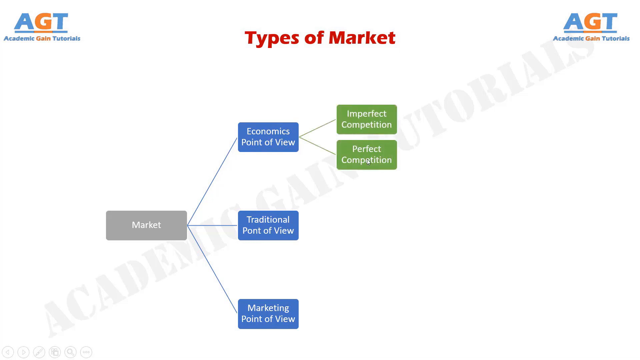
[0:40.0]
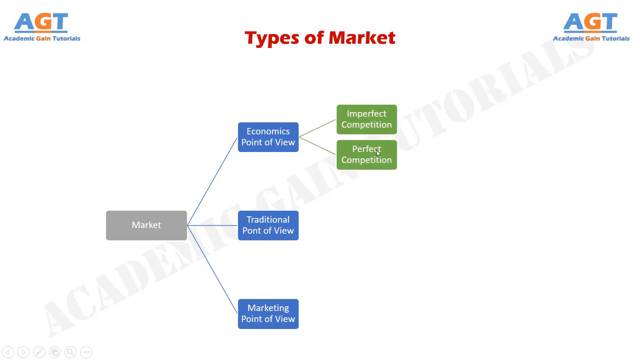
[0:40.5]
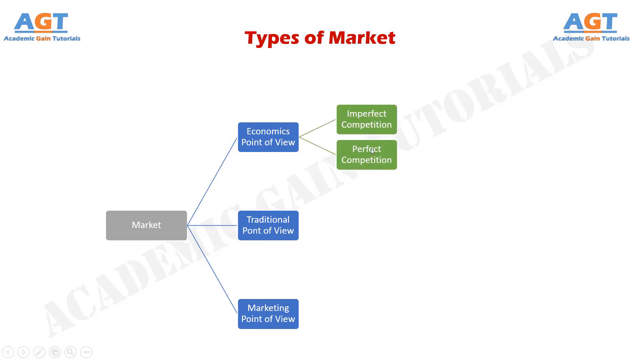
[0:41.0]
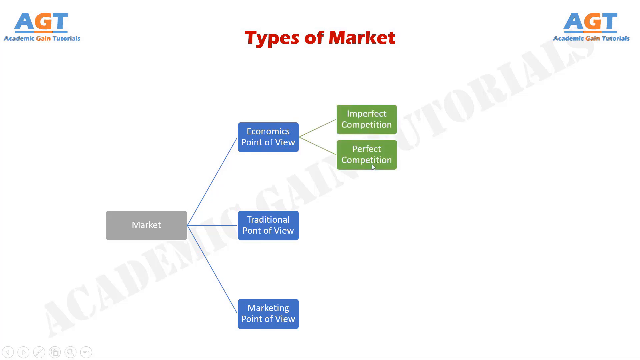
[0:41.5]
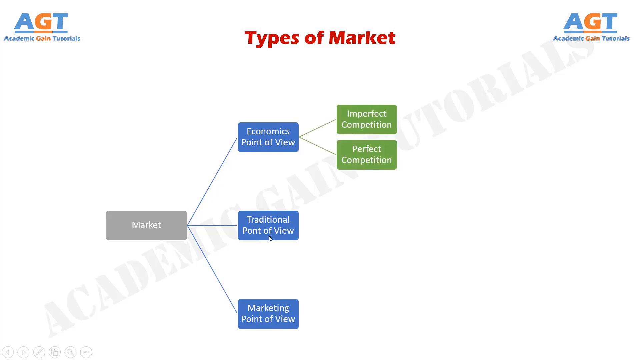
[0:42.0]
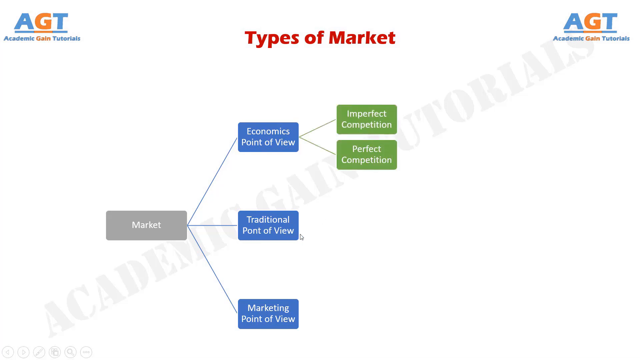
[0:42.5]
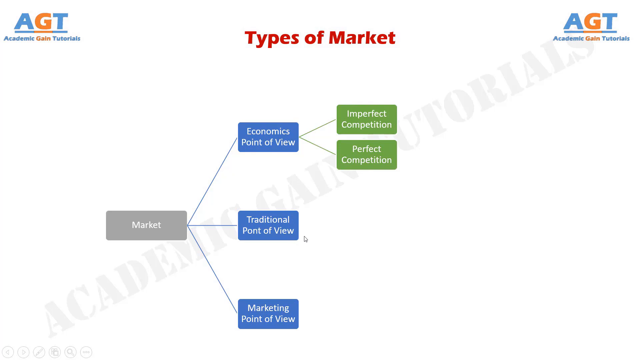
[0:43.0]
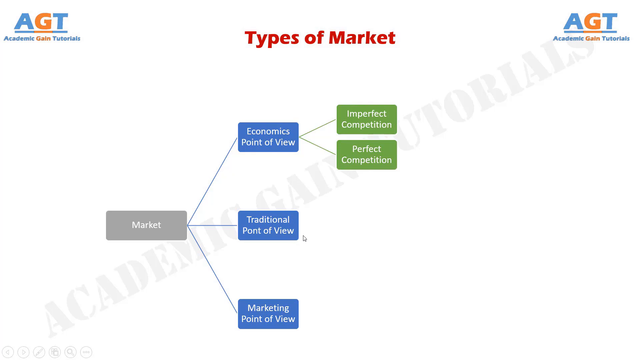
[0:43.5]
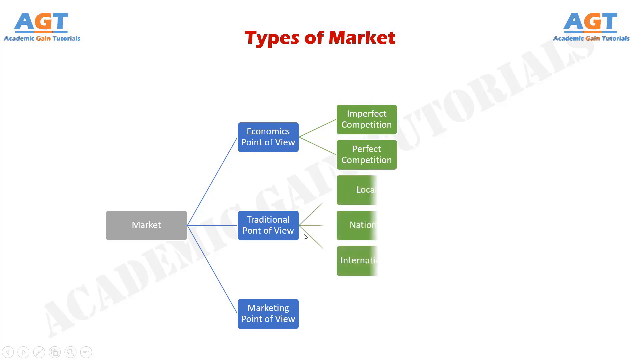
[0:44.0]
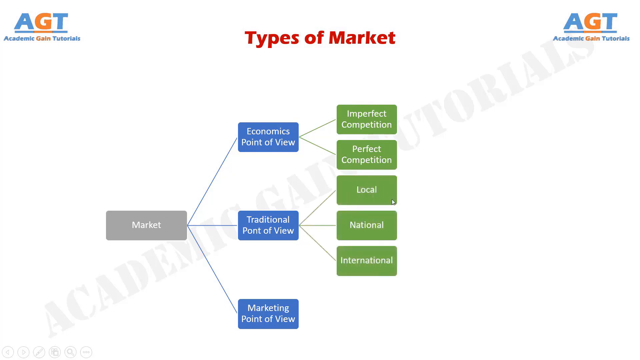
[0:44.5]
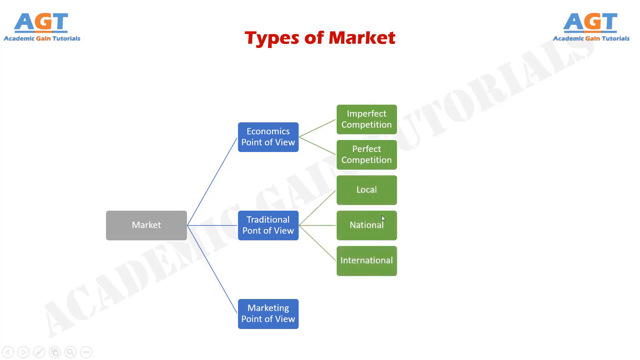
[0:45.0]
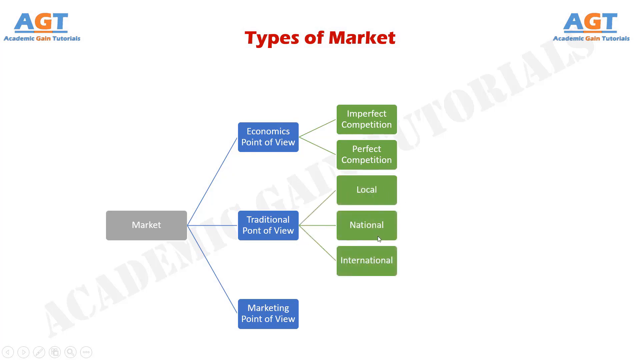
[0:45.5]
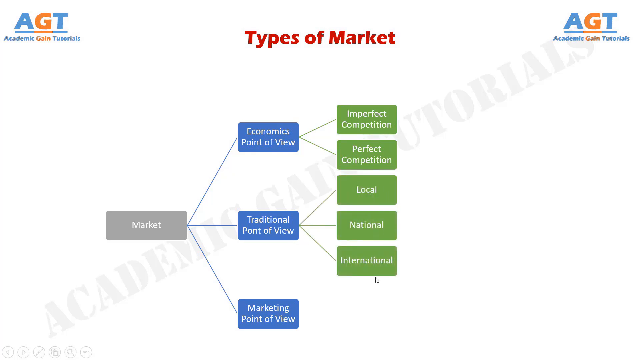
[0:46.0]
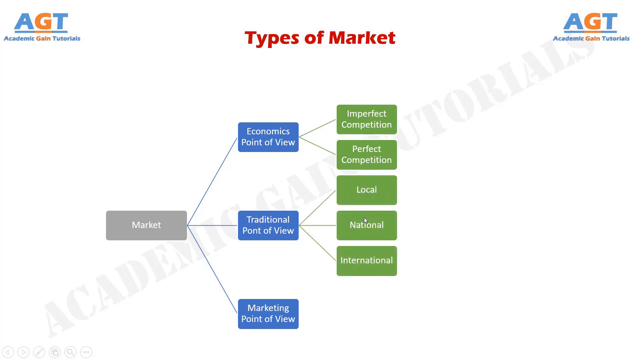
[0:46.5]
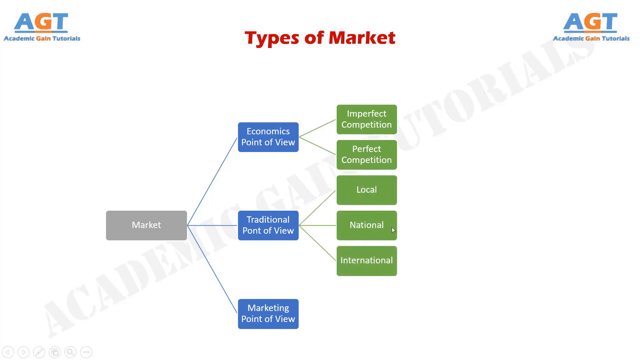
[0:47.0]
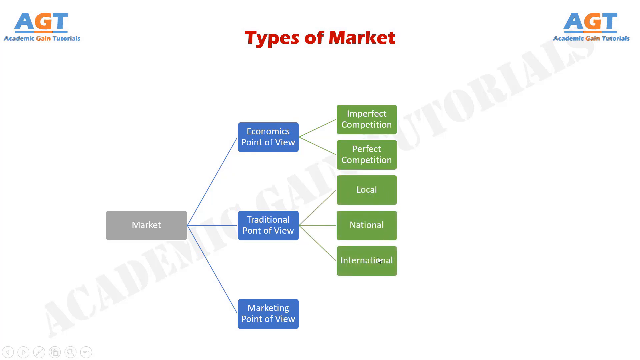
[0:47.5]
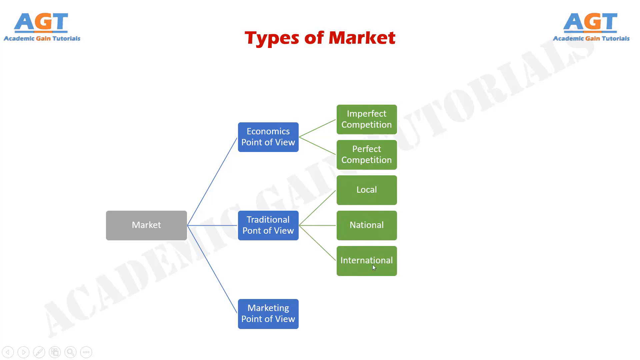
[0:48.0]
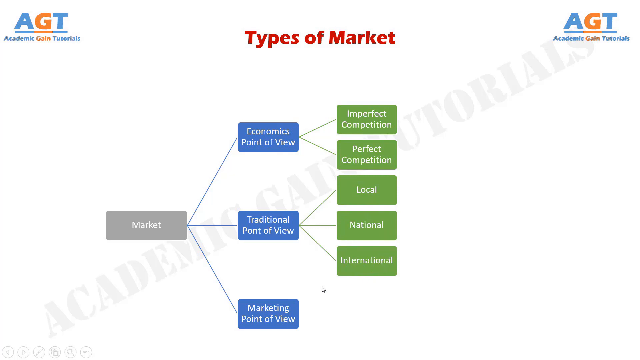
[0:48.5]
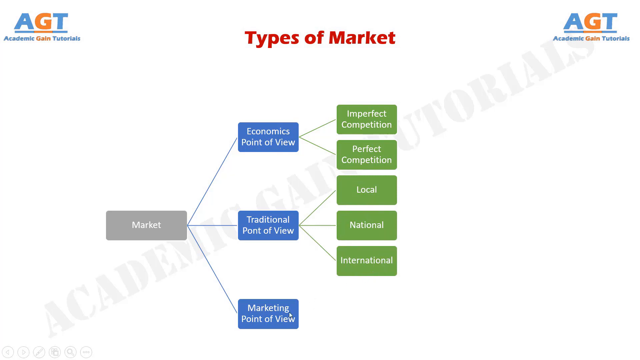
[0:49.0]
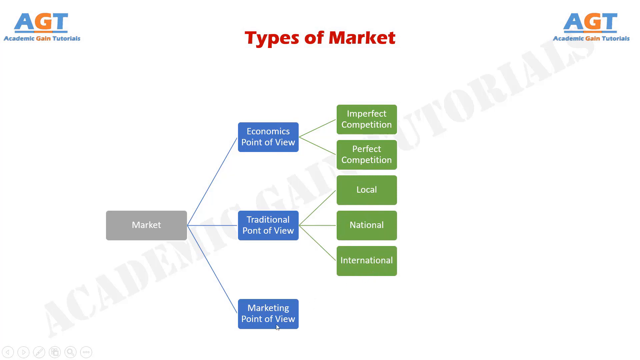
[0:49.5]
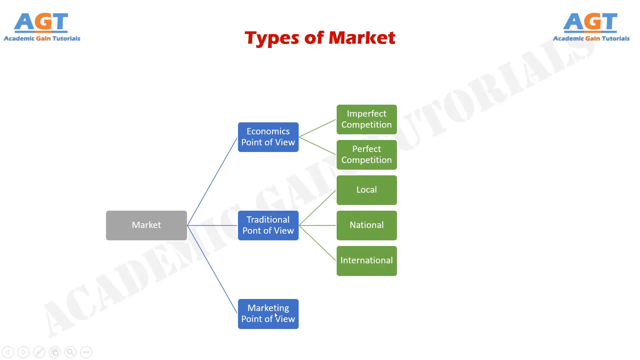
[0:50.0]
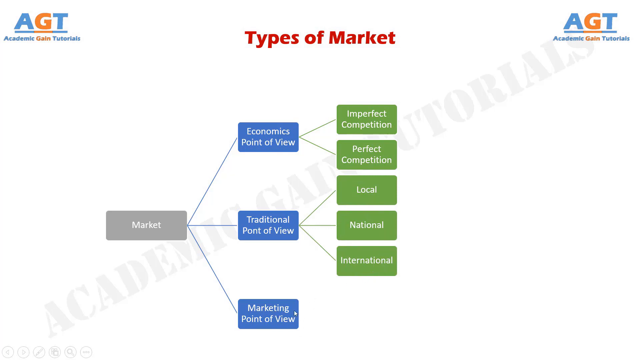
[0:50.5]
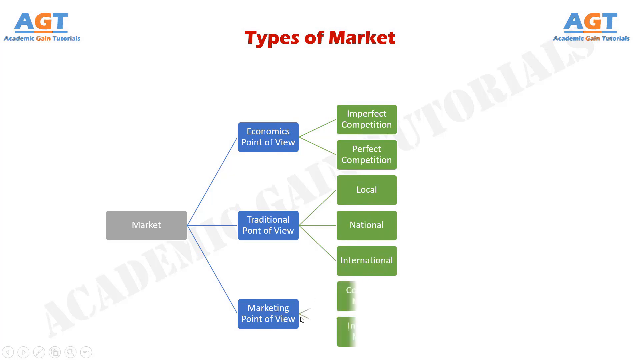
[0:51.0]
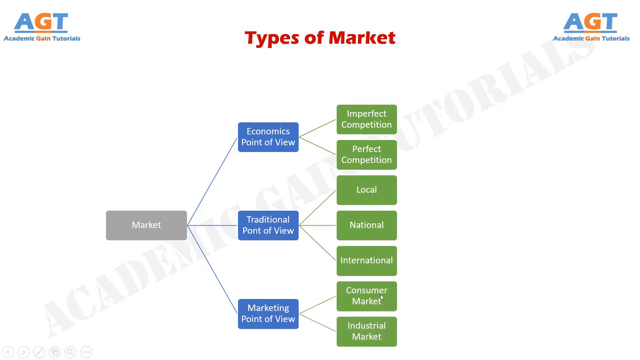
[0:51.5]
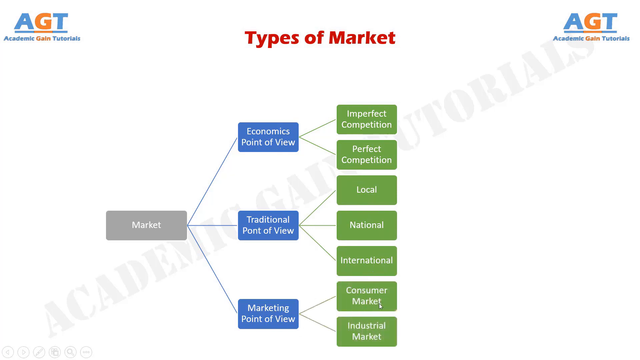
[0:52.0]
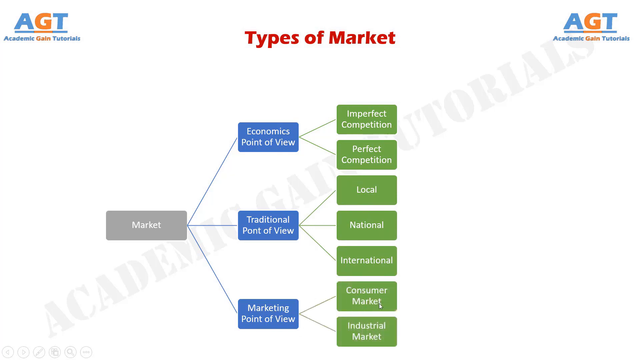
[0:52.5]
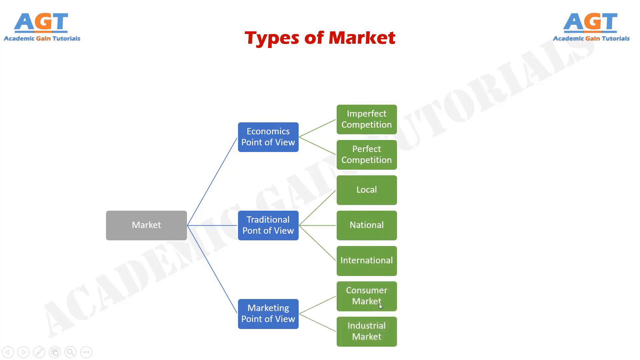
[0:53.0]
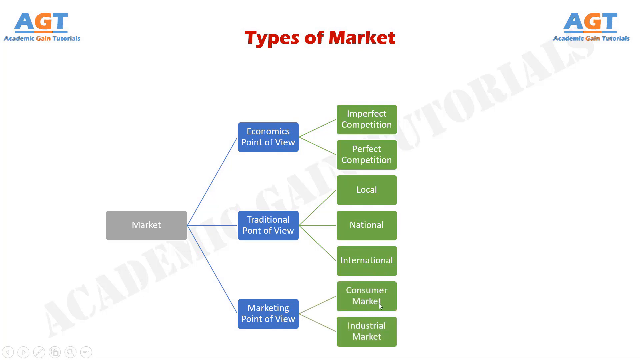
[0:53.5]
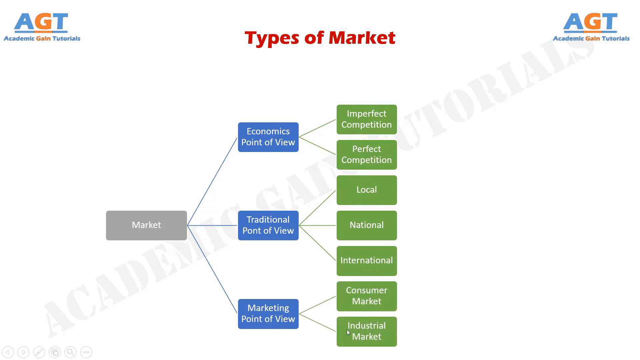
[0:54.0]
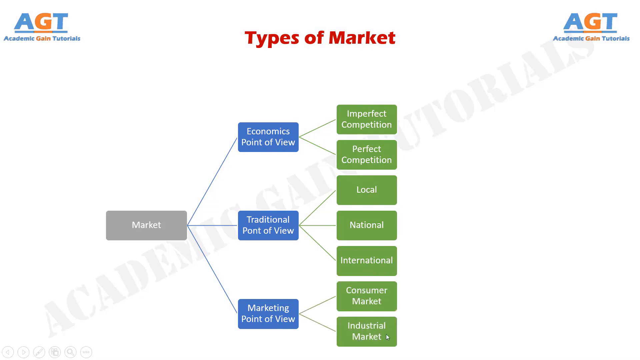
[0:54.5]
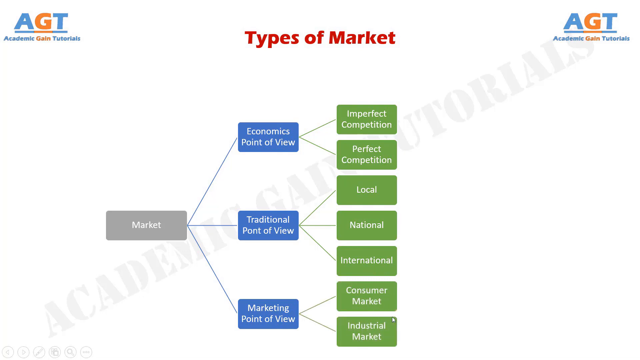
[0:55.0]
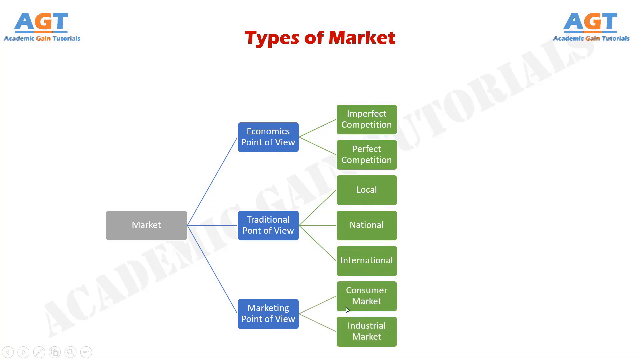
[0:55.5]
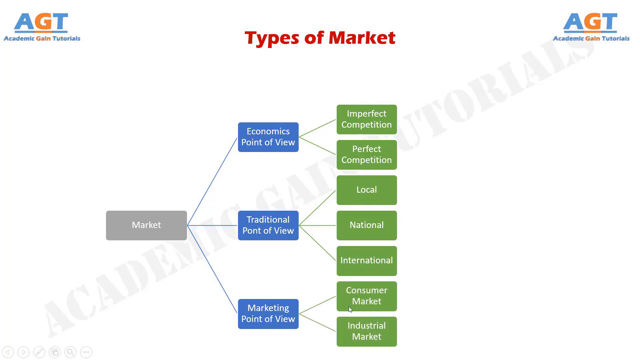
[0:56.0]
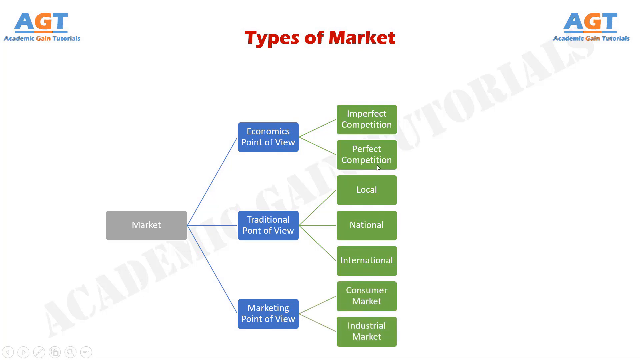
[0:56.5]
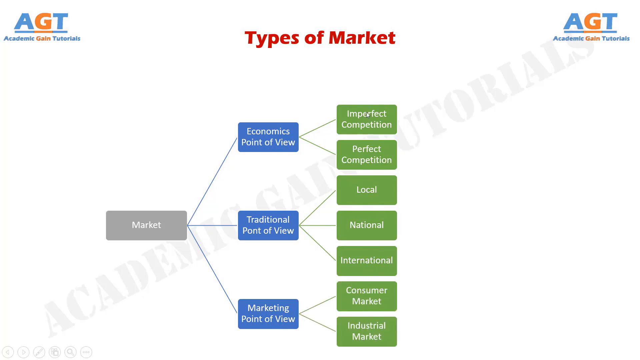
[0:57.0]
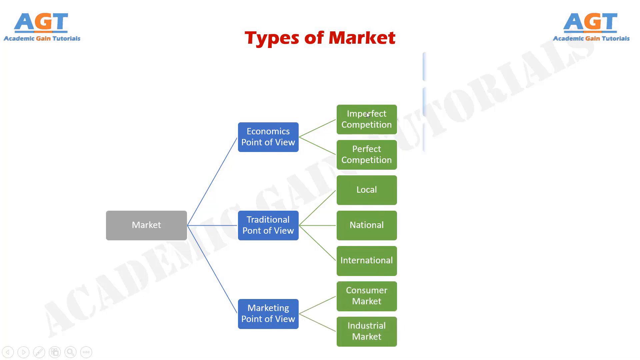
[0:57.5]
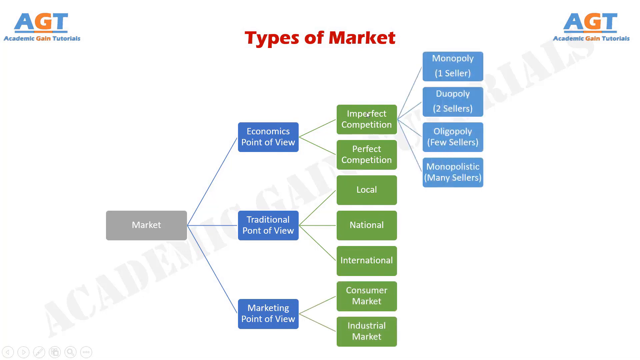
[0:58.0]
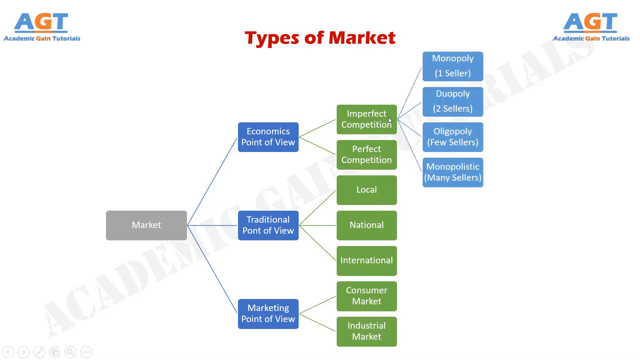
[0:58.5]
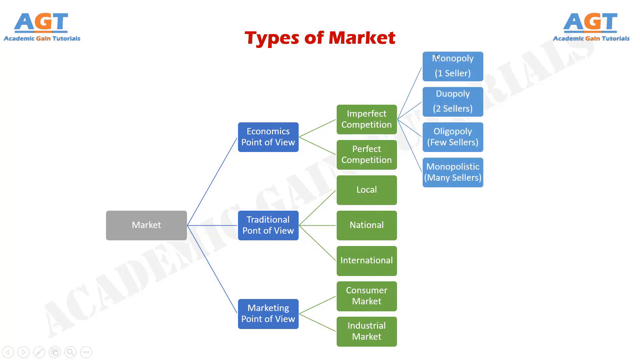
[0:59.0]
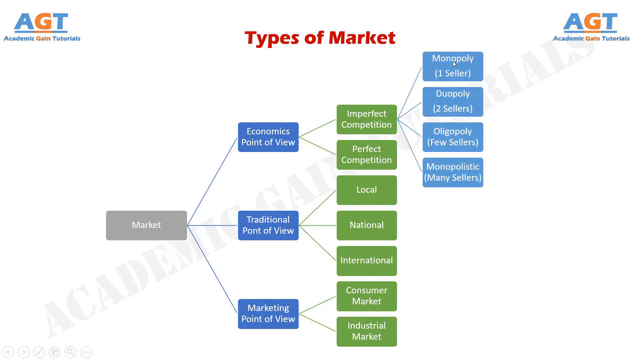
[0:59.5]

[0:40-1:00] A title reads "types of market". From a single grey box, lines connect to three blue boxes. The top blue box, labeled economics point of view, connects to two green boxes: imperfect competition and perfect competition. The second blue box says traditional point of view, and three green boxes are connected to it: local, national, and international. The bottom blue box says marketing point of view, and two lines come out from it connecting to two more green boxes stating consumer market and industrial market. From the imperfect competition box at the very top, there are four more boxes: monopoly, duopoly, oligopoly, and monopolistic. The computer's cursor moves around many of these boxes as if emphasizing them or pointing to them.